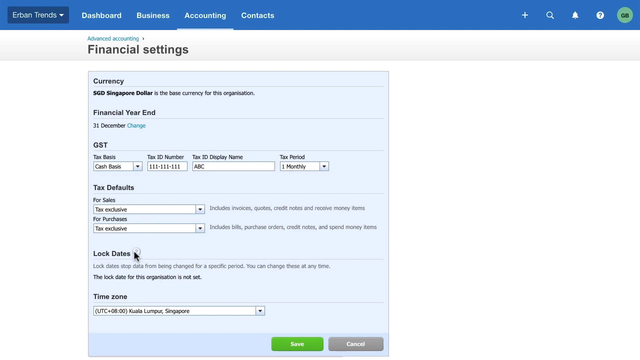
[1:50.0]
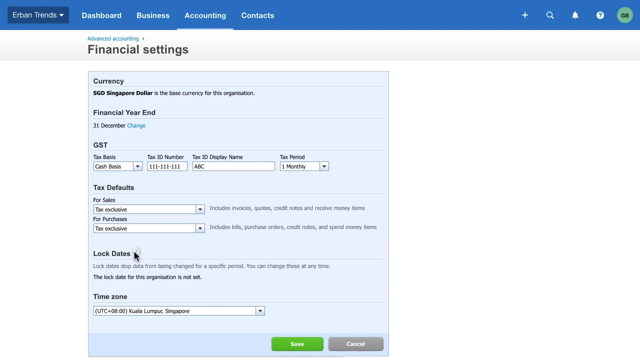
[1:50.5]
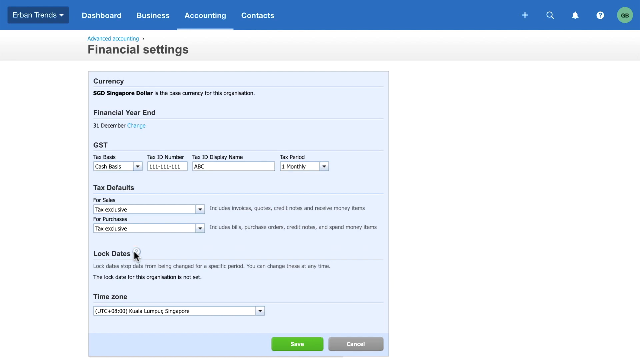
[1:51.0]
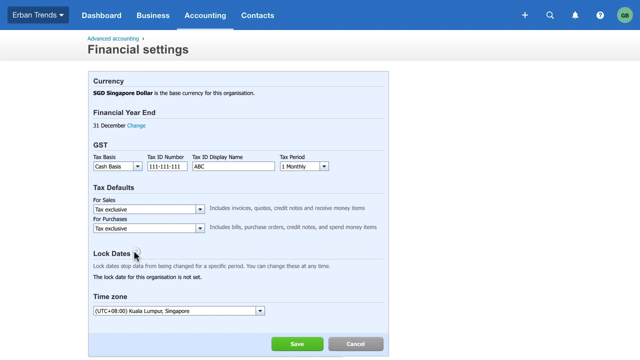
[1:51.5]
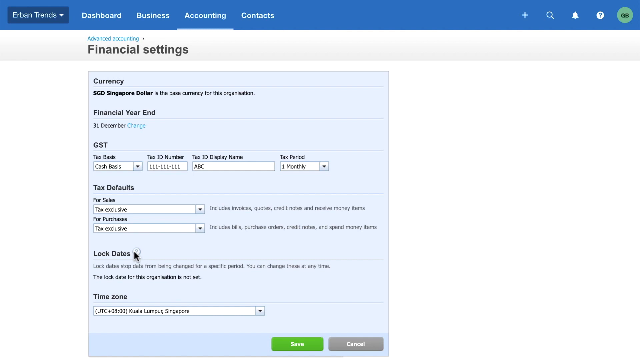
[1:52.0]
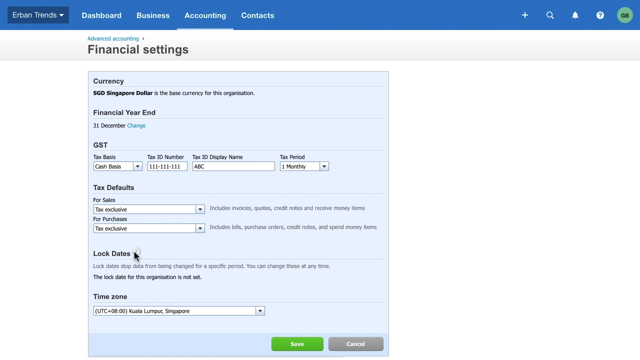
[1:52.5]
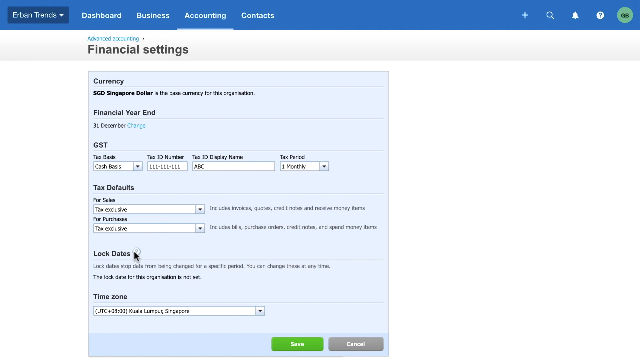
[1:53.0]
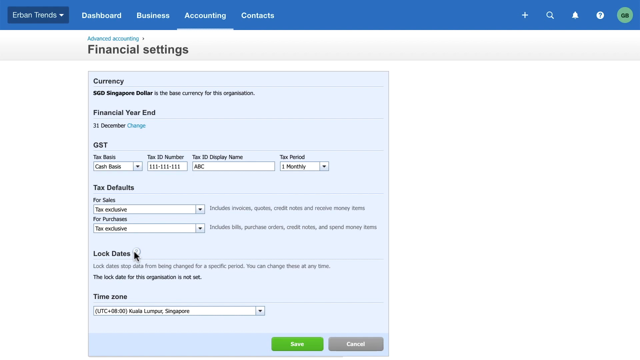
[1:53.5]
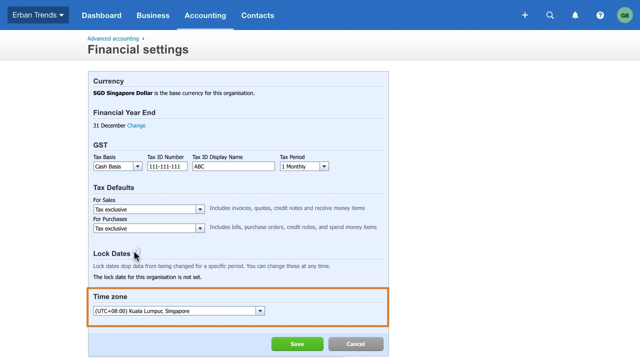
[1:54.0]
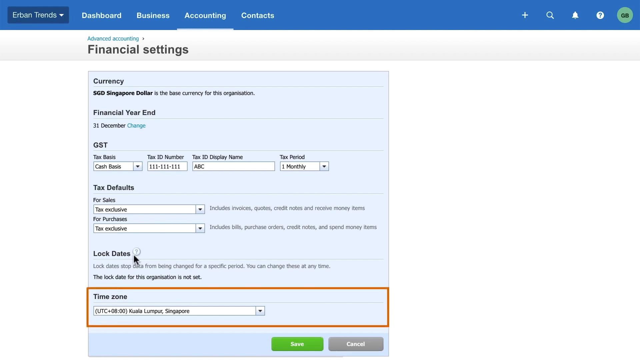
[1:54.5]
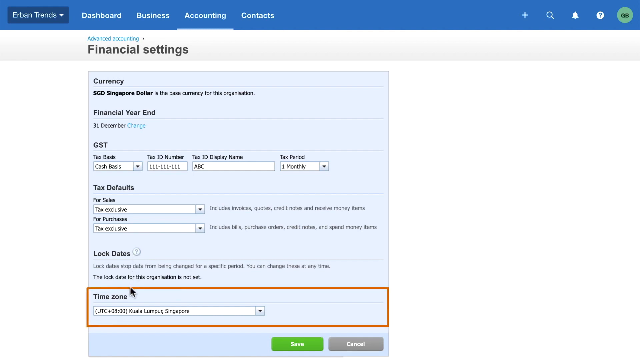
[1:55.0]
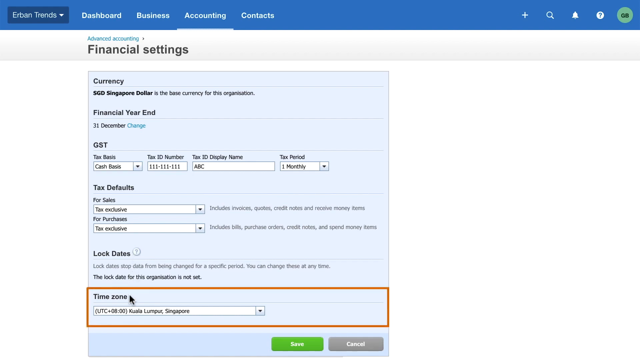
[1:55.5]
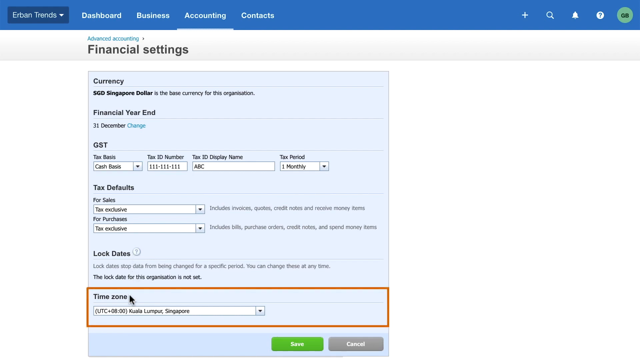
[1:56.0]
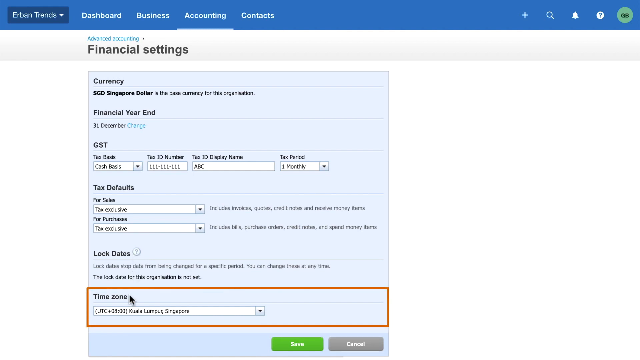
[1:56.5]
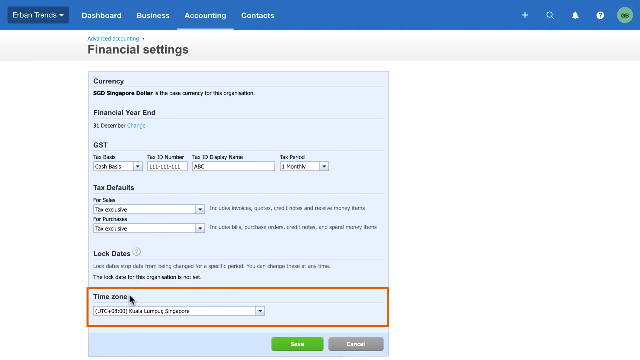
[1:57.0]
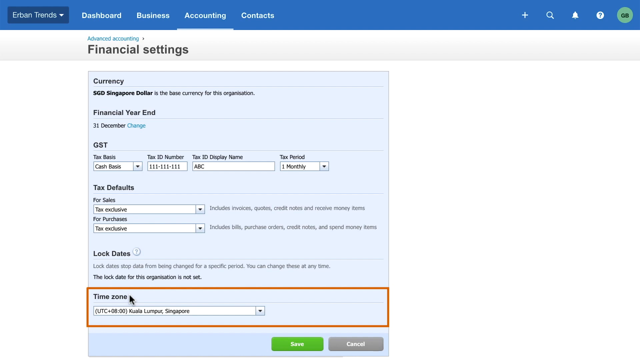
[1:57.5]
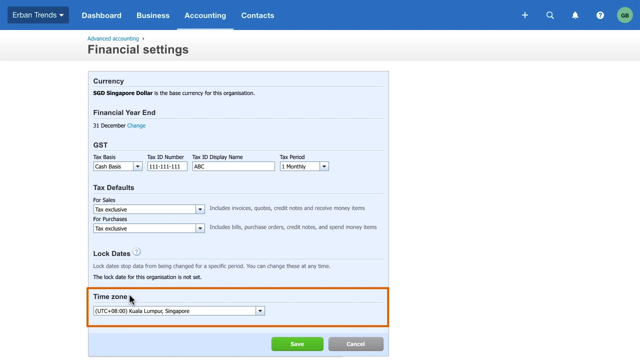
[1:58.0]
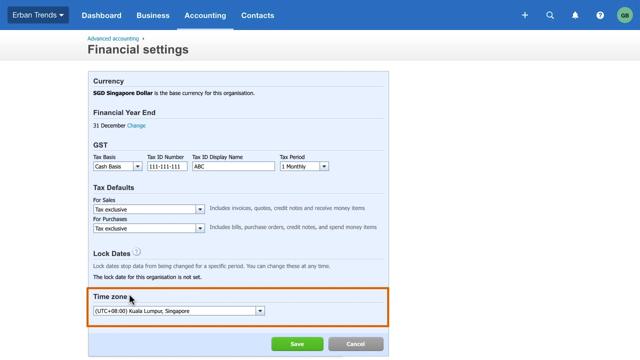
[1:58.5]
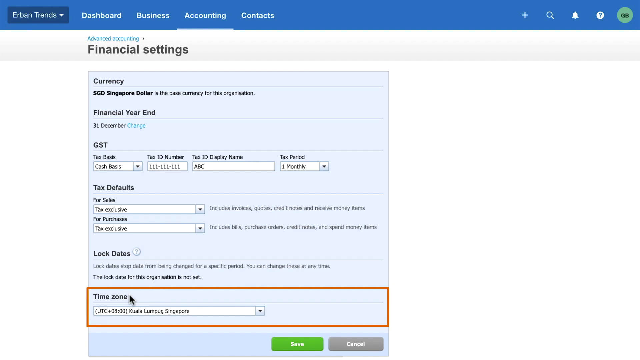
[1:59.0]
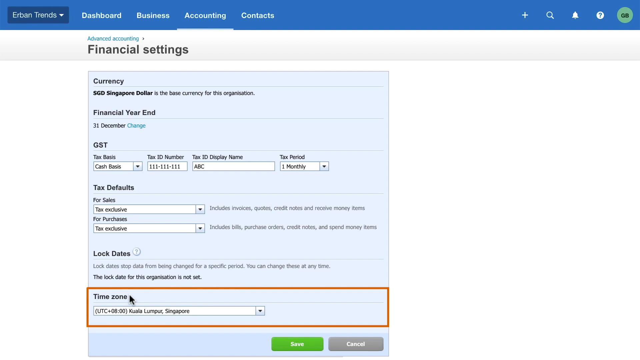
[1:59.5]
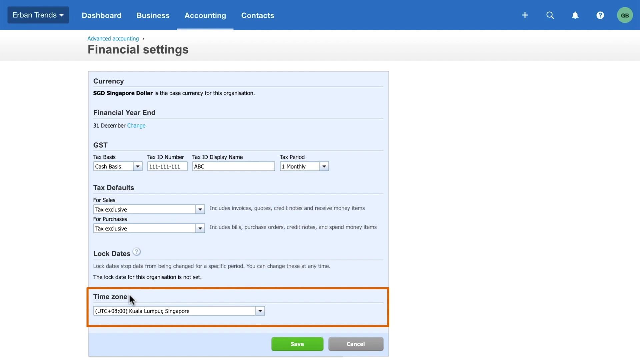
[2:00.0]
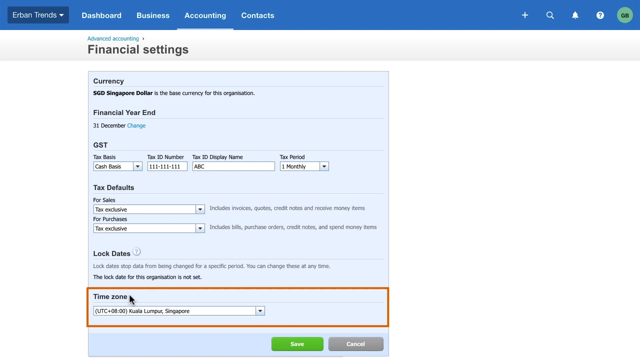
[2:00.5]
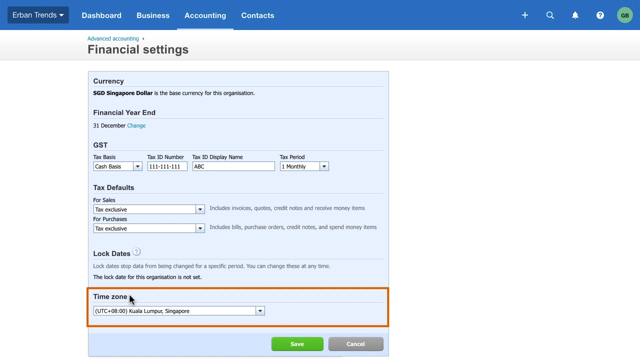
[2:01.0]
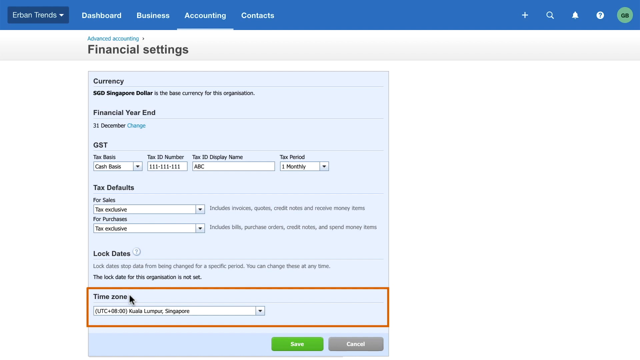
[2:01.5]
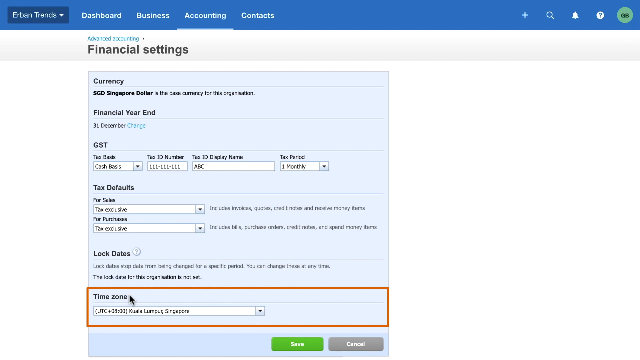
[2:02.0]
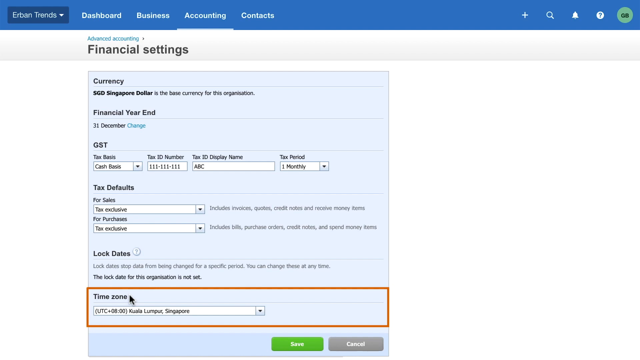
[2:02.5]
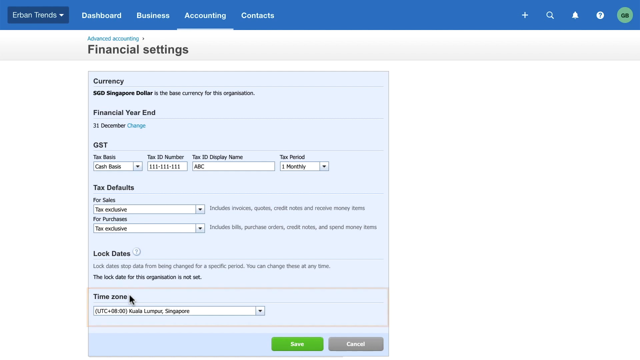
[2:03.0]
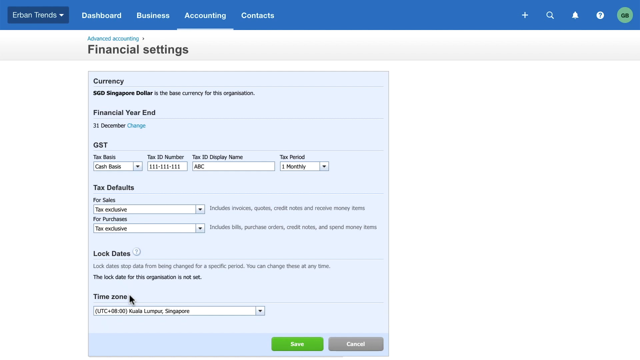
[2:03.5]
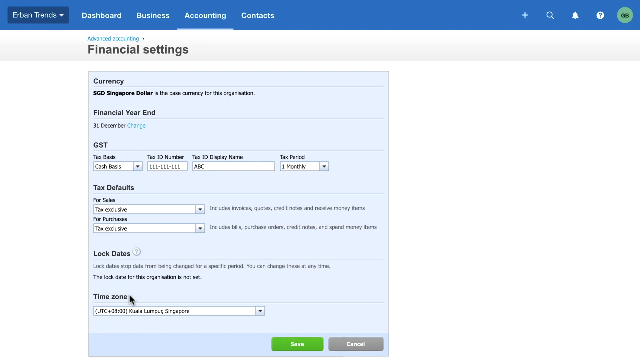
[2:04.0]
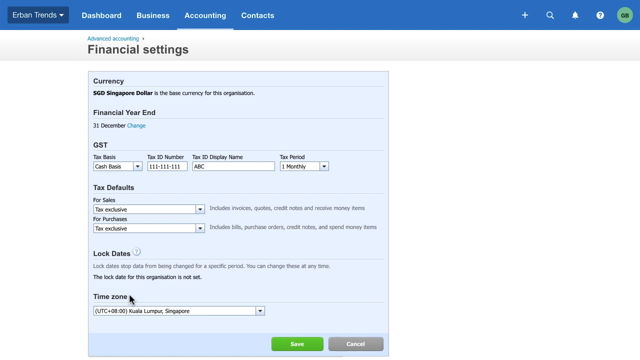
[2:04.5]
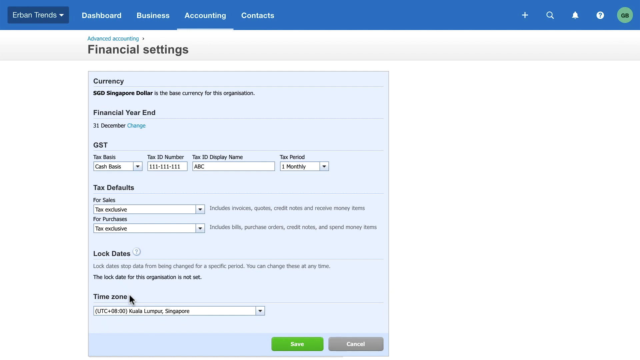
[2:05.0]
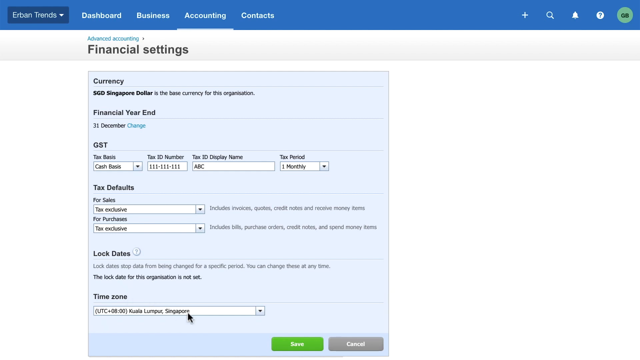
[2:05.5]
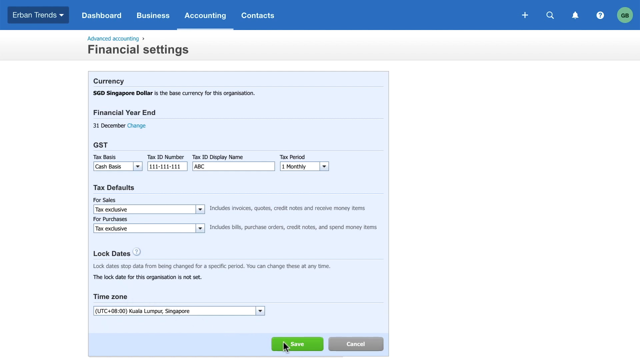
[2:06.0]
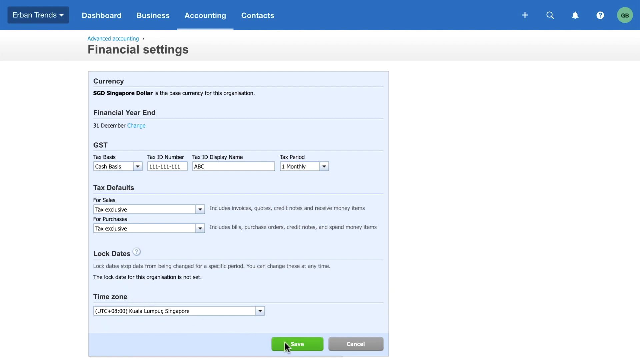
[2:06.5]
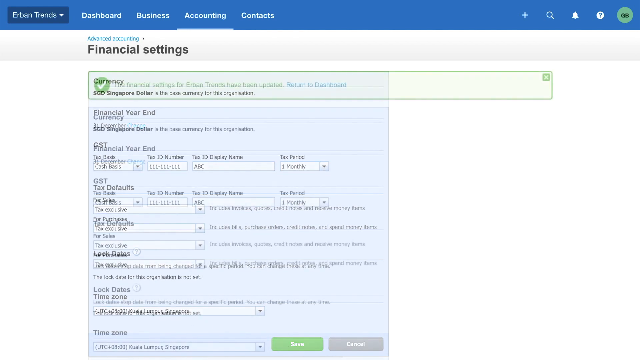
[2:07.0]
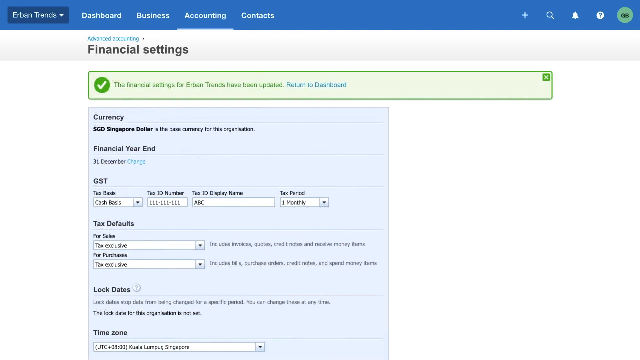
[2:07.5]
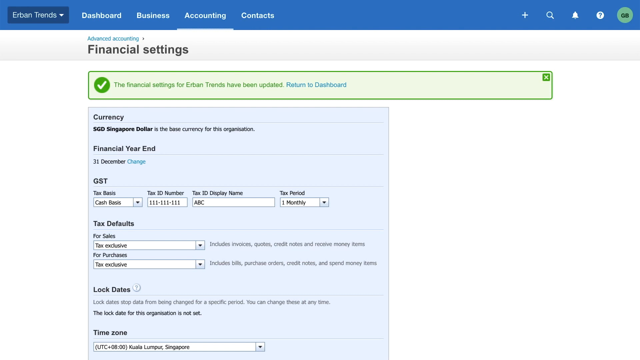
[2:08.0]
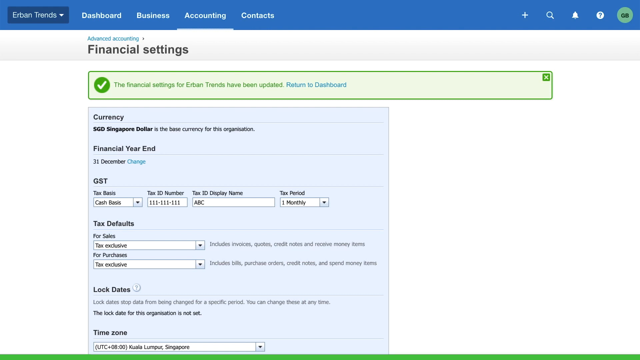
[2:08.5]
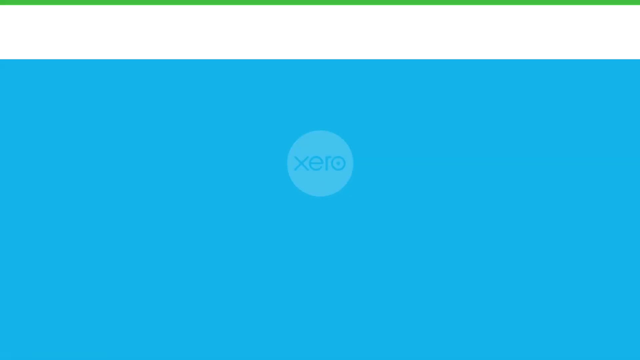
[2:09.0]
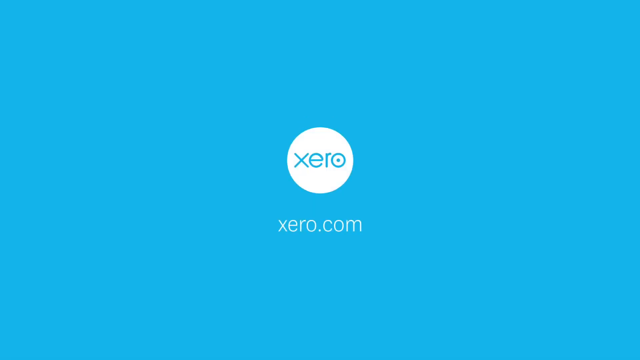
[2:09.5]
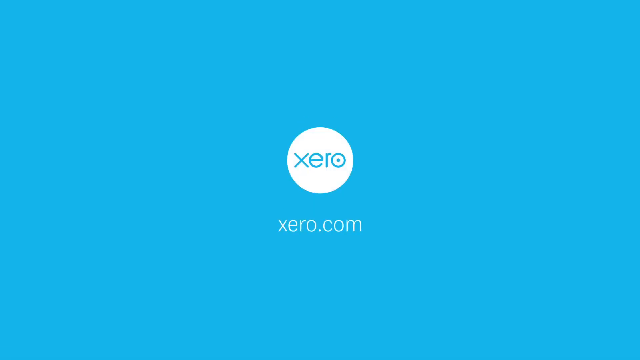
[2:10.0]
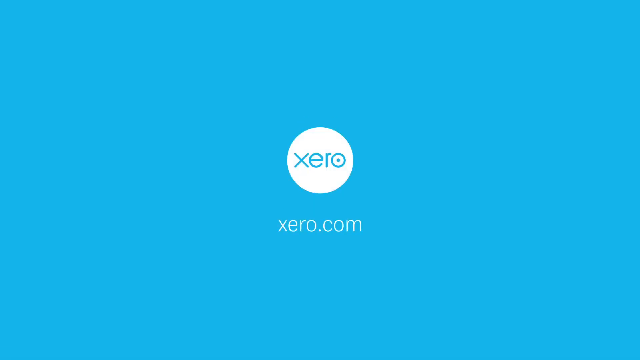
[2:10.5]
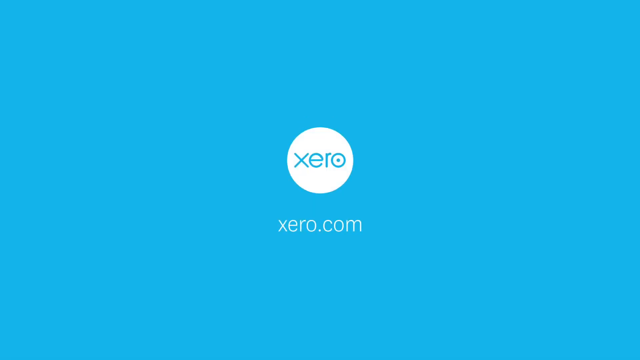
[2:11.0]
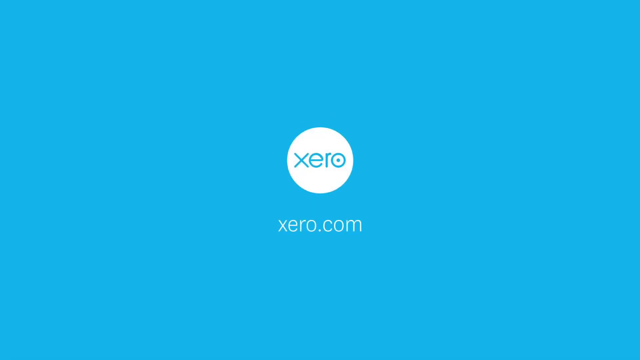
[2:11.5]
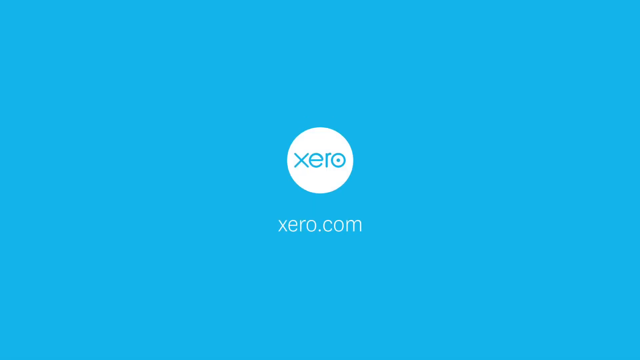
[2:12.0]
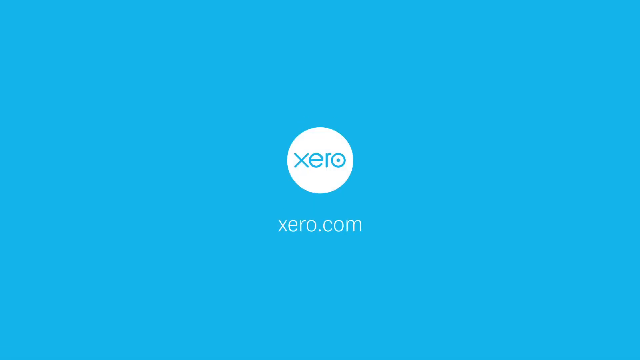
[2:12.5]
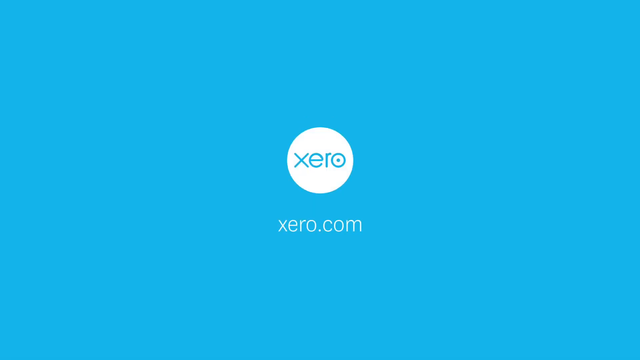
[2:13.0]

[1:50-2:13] The time zone section is highlighted, and the cursor comes down to the time zone, which is set to "UTC+8, Kuala Lumpur, Singapore." The person then clicks the green Save button. A confirmation message reads "the financial settings for erban trends have been updated" with "return to dashboard." It appears in a light green box with a green border and a green check mark, with a dark green border along the bottom of the screen and a green X to close the prompt. Time zone is the last section covered on the financial settings page before saving.